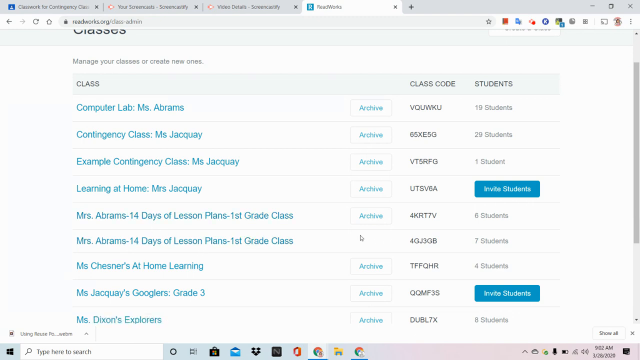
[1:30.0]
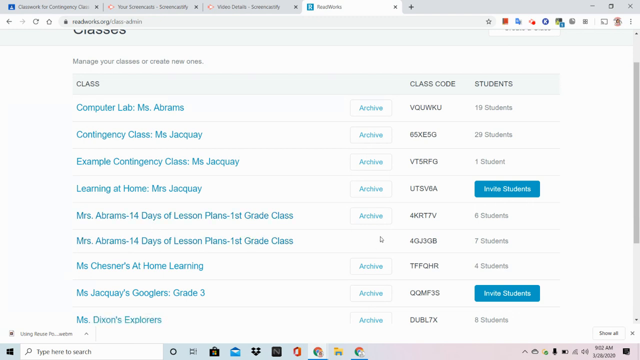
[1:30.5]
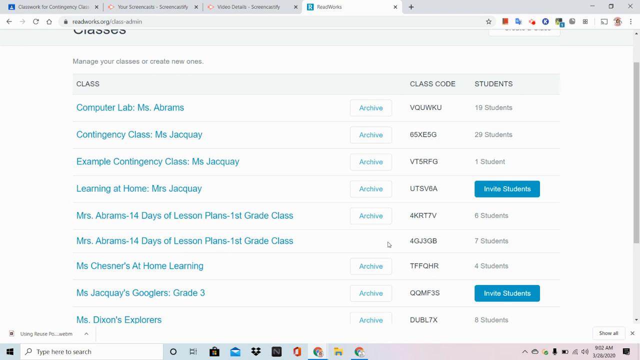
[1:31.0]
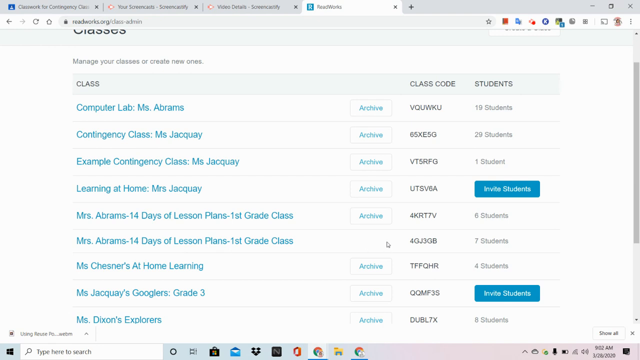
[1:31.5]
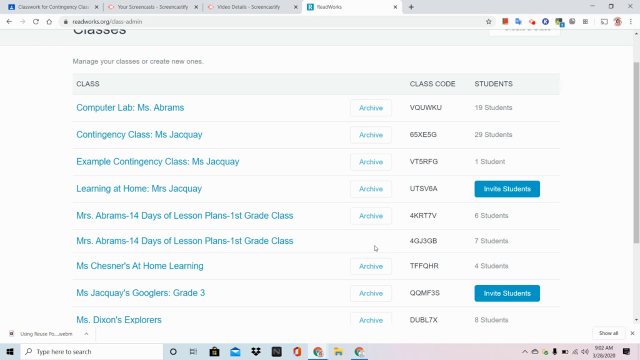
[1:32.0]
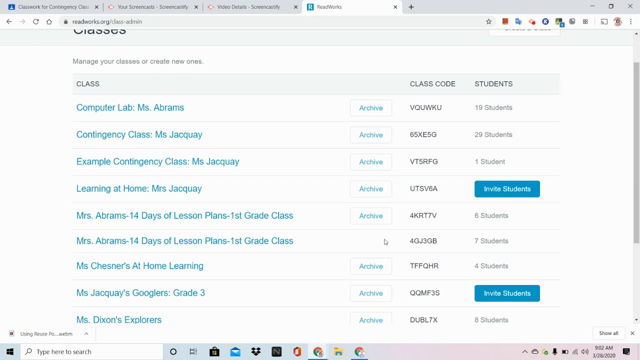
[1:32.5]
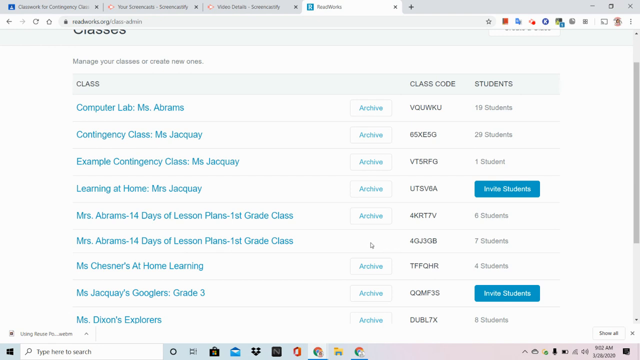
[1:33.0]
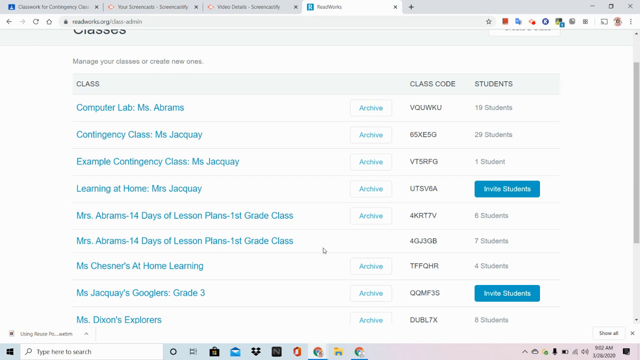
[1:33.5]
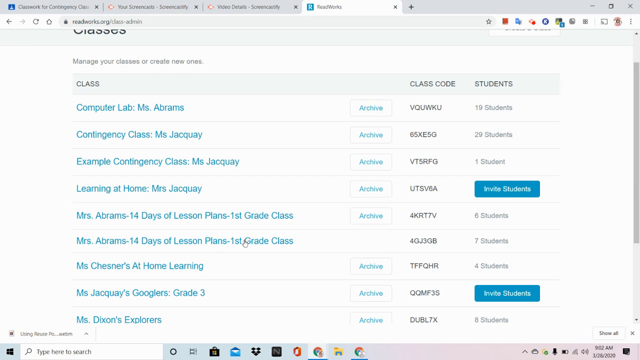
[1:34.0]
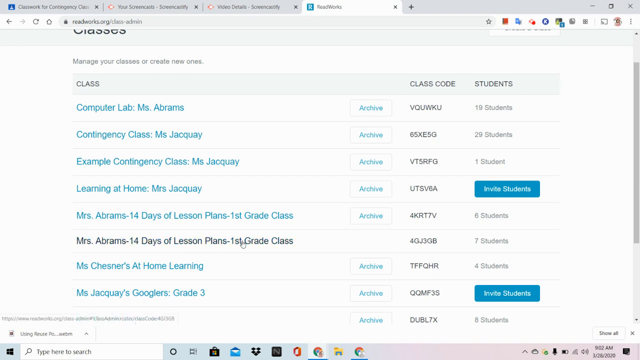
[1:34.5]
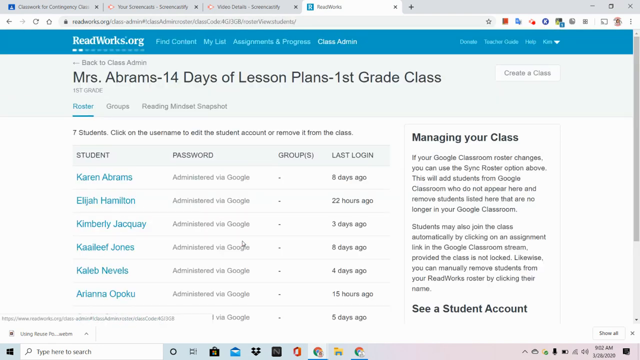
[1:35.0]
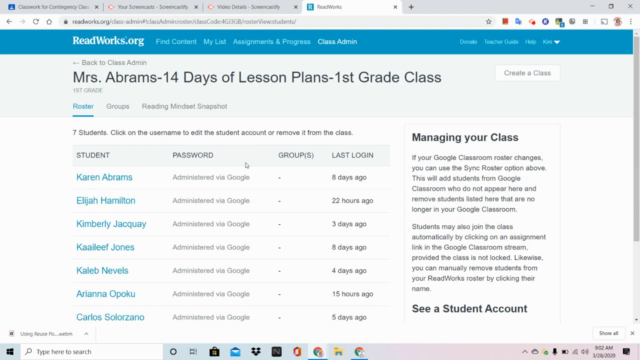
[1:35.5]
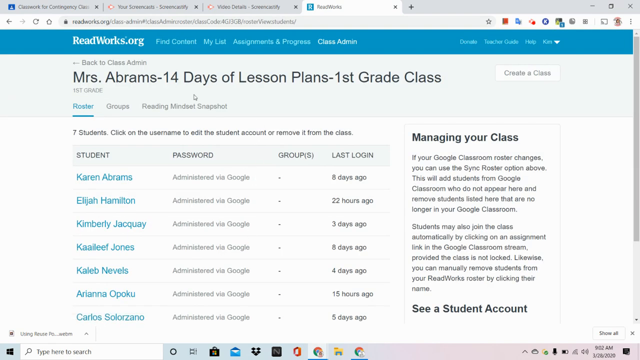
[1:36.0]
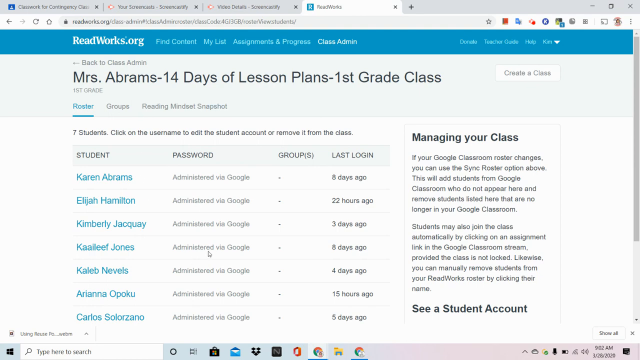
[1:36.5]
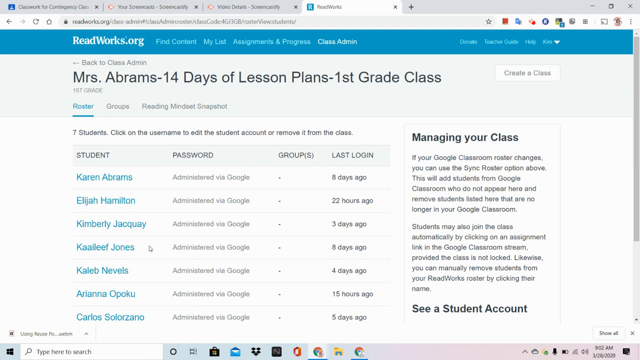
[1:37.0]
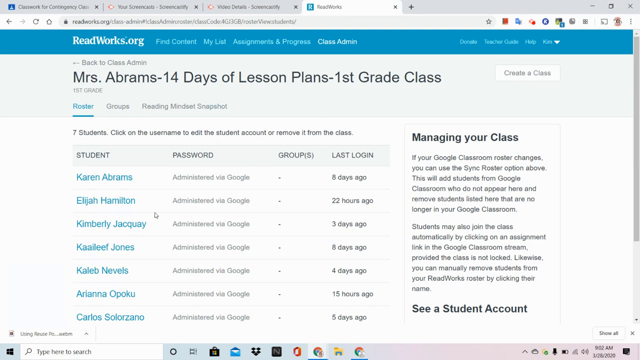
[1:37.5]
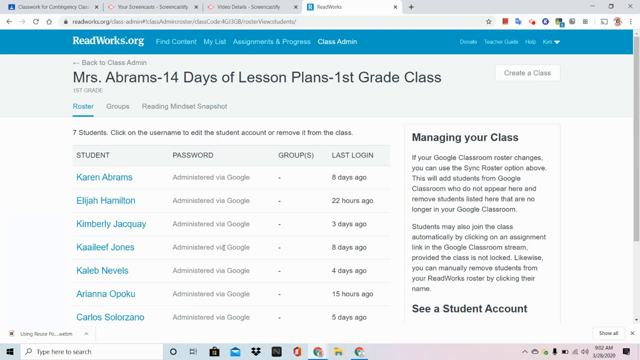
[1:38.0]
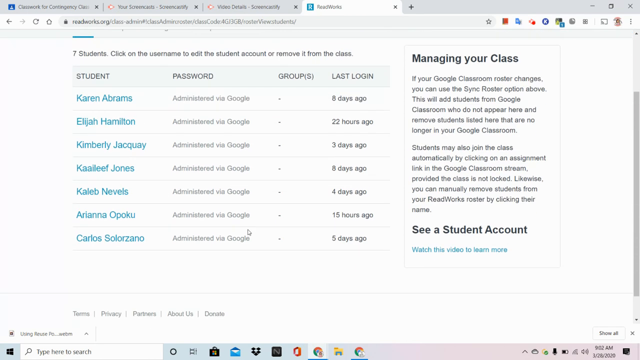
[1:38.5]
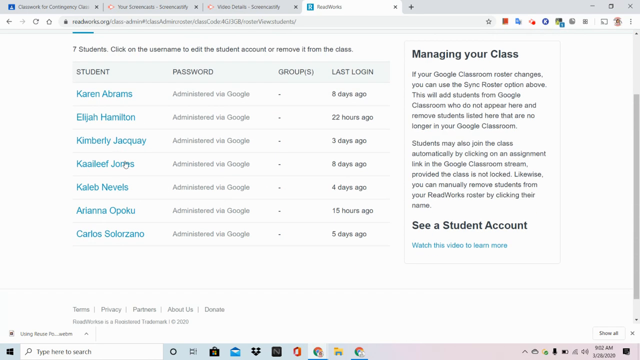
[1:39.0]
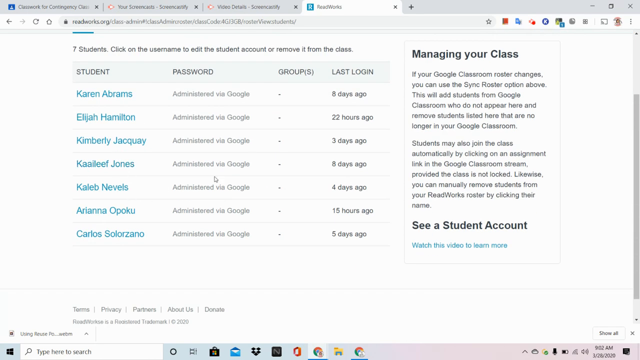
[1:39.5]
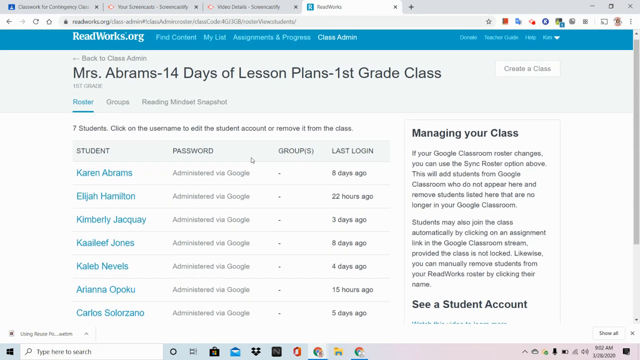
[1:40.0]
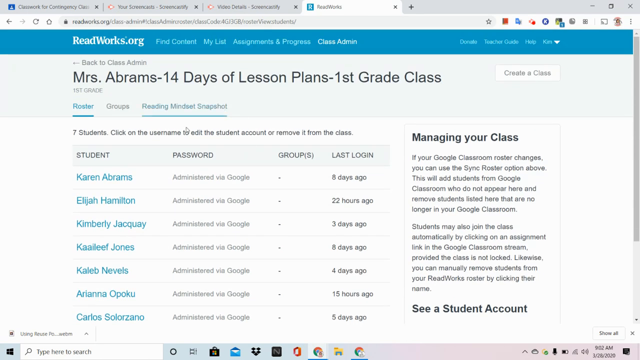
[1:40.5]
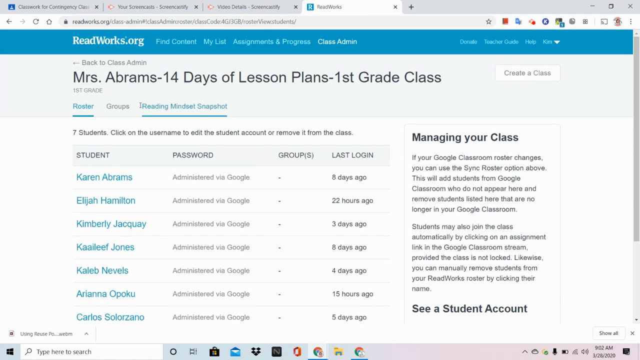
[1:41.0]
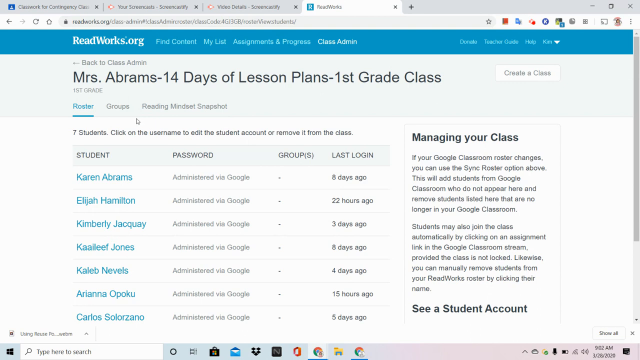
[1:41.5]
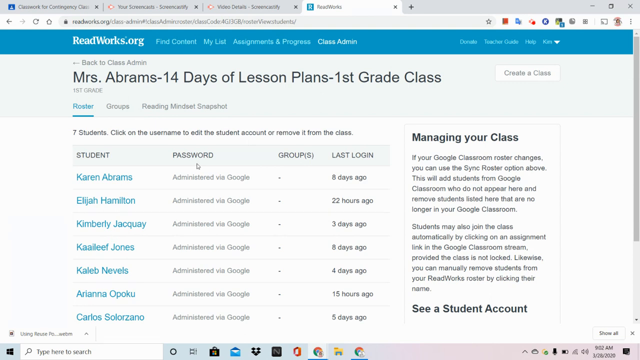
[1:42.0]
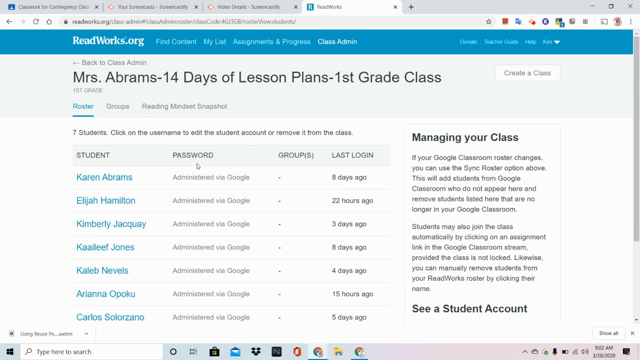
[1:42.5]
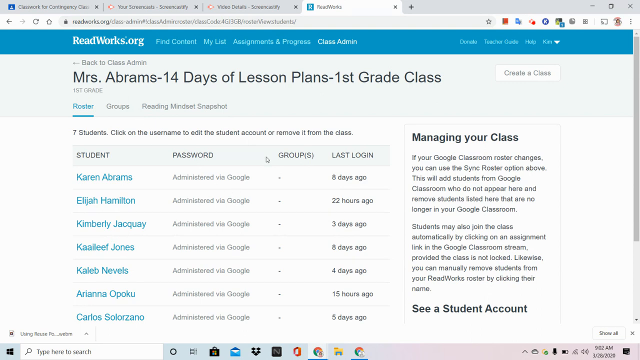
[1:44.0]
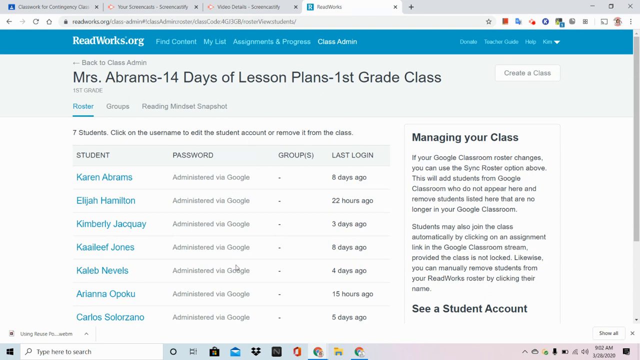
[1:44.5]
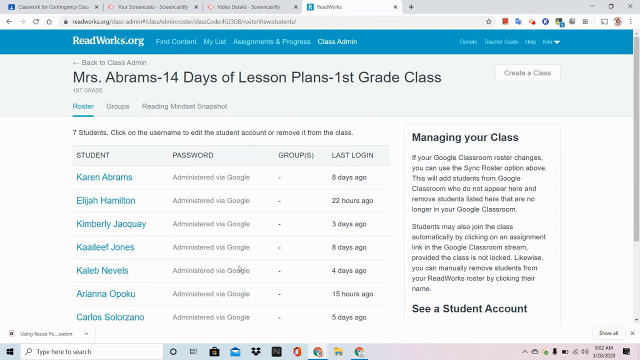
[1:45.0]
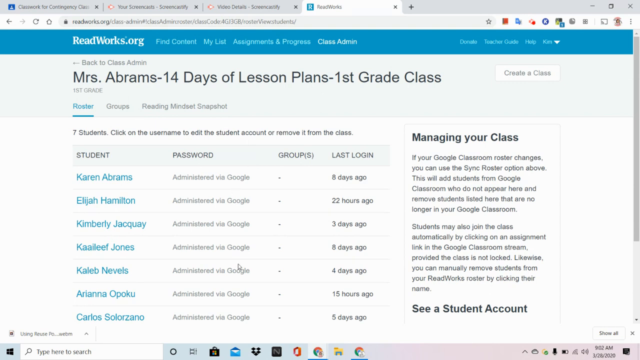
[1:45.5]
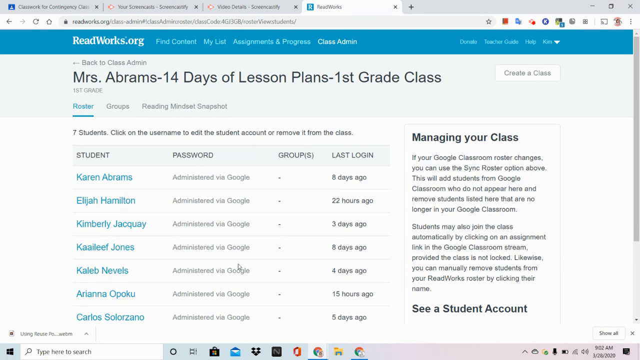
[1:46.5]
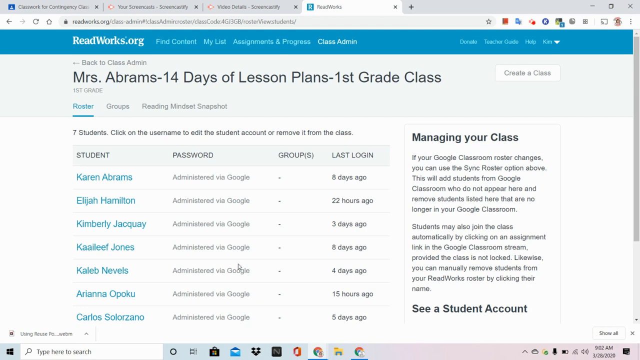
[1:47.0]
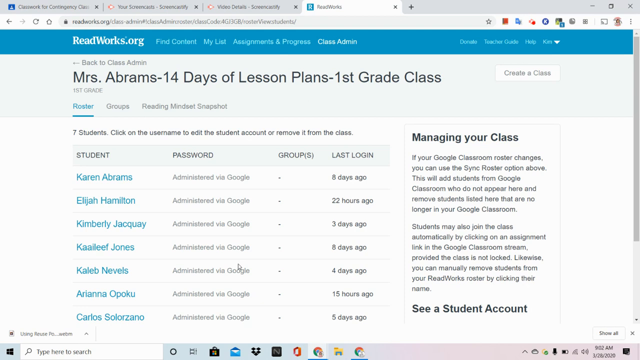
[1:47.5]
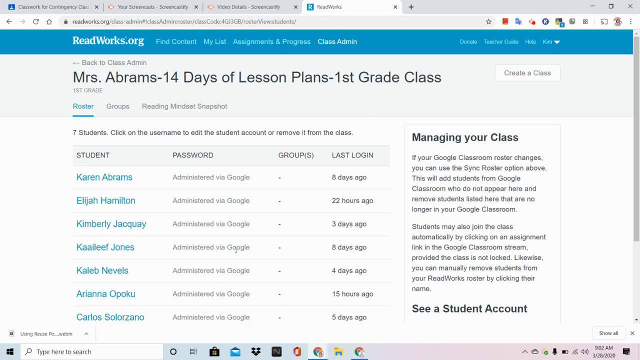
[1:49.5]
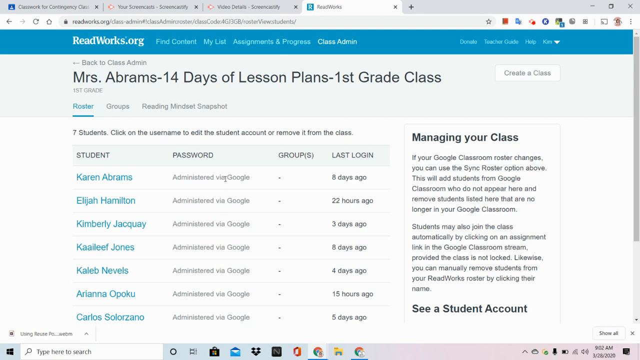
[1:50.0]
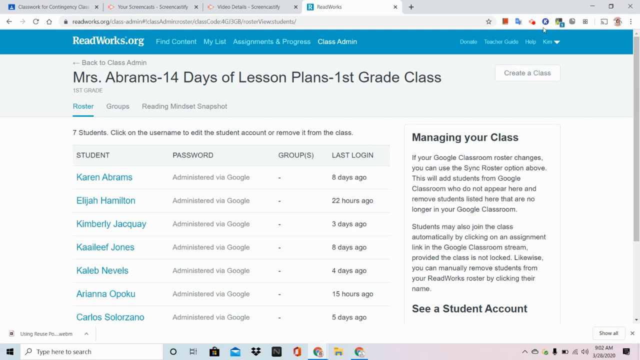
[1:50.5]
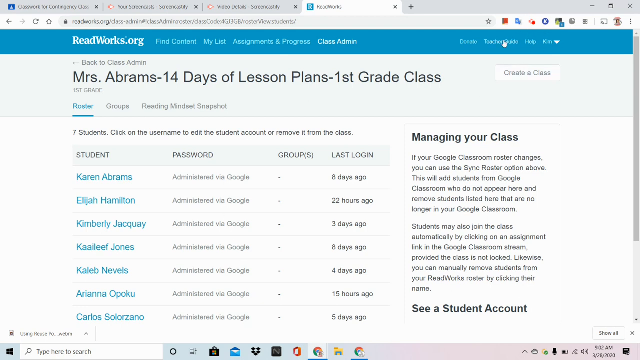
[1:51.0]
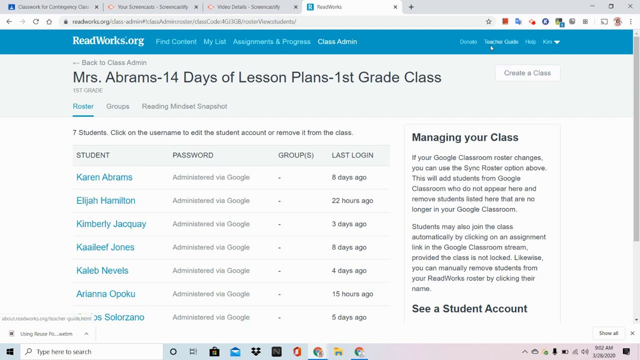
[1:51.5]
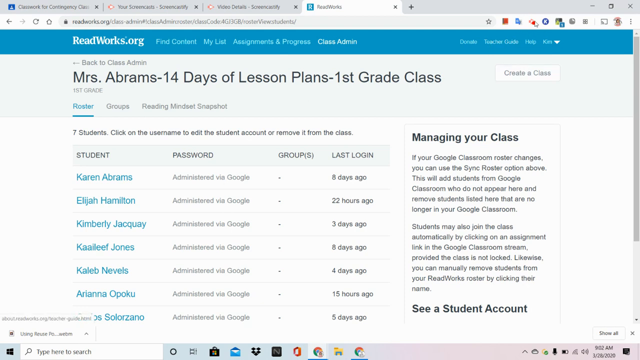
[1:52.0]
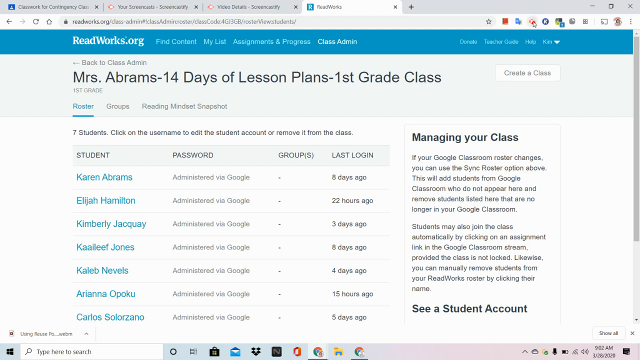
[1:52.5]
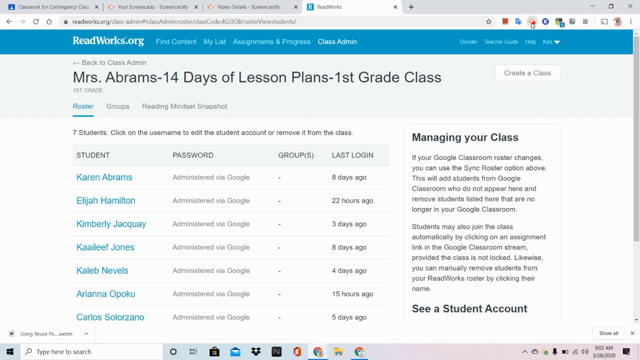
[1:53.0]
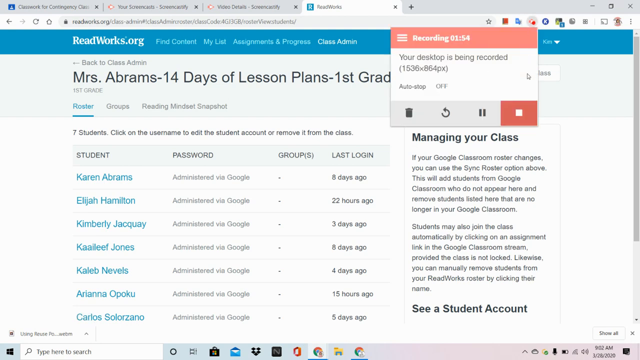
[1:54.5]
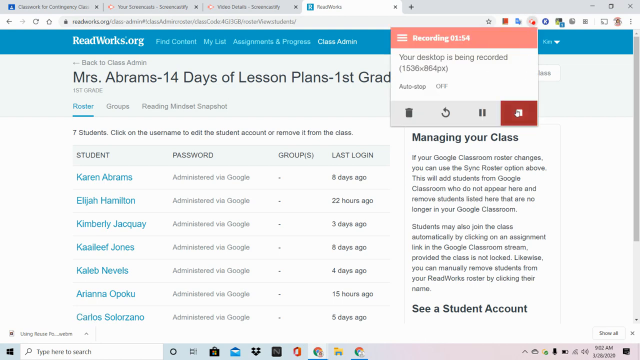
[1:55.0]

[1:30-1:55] The pointer clicks on "Mrs Abrams- 14 days of lesson plans - 1st Grade Class"; as it hovers over that text, the text changes colour to dark blue. The page then shows the lineup under "Mrs Abrams -14 days lesson plans - 1st grade class". There are 7 students in this class, named Karen Abrams, Elijah Hamiliton, Kimberly Jacquay, Kaaileef Jones, Kaled Nevels, Ariana Opoku and Carlos Solorzano.